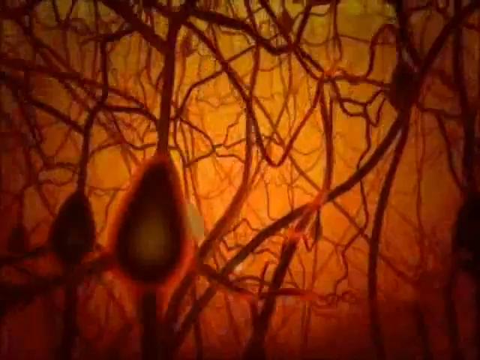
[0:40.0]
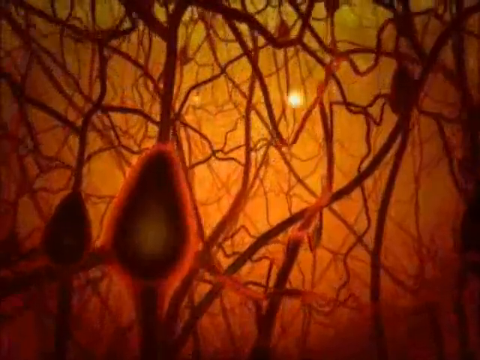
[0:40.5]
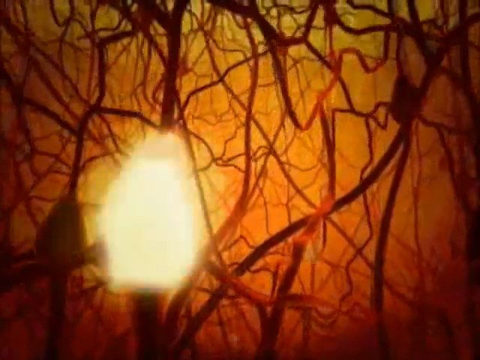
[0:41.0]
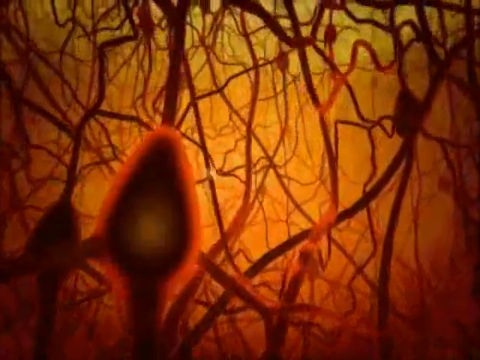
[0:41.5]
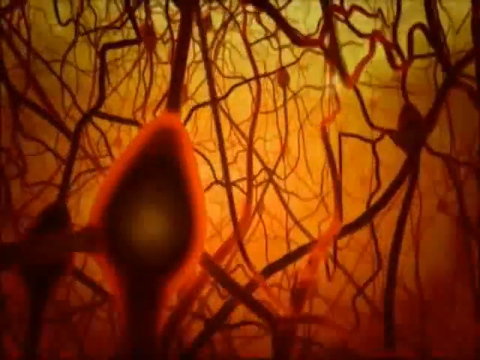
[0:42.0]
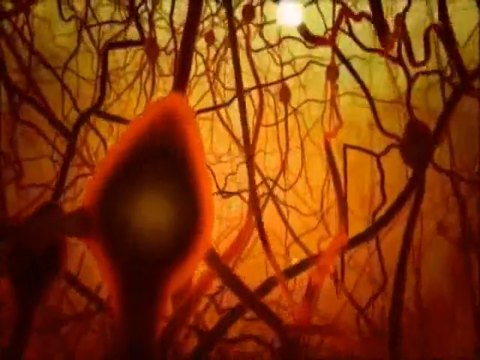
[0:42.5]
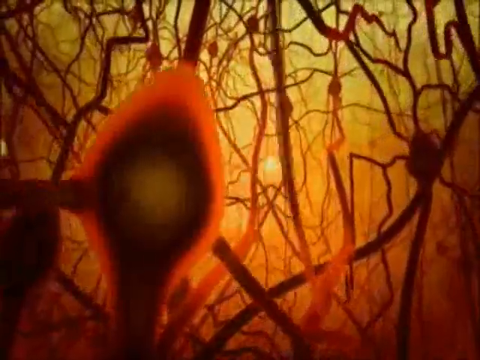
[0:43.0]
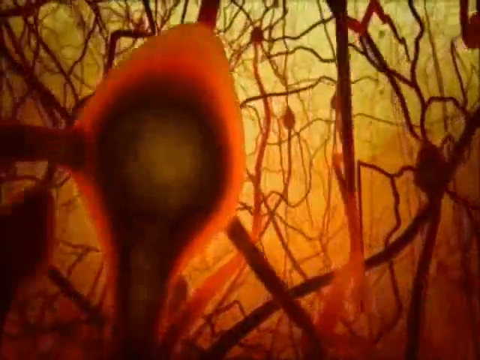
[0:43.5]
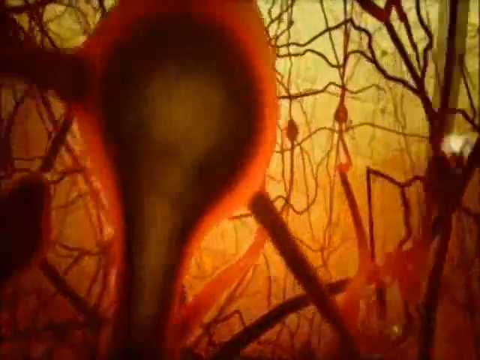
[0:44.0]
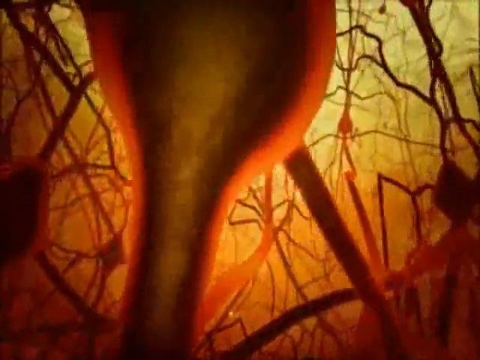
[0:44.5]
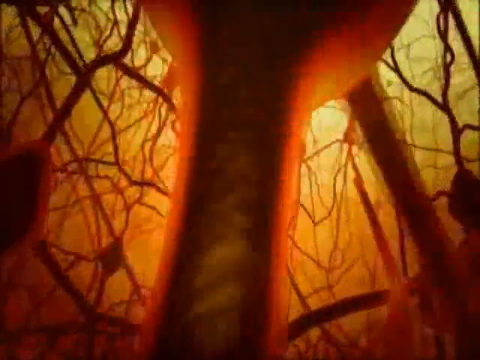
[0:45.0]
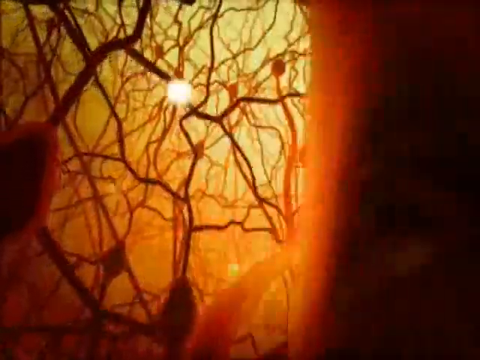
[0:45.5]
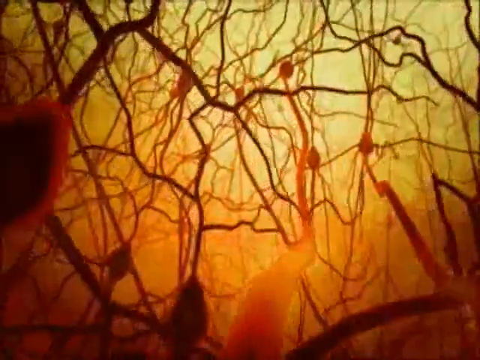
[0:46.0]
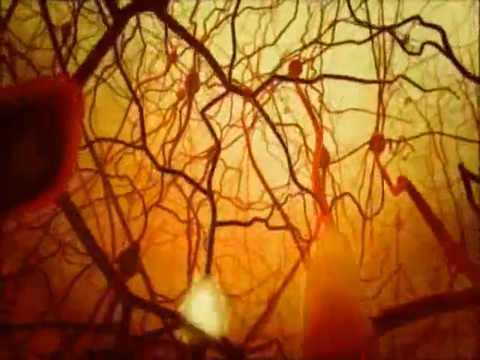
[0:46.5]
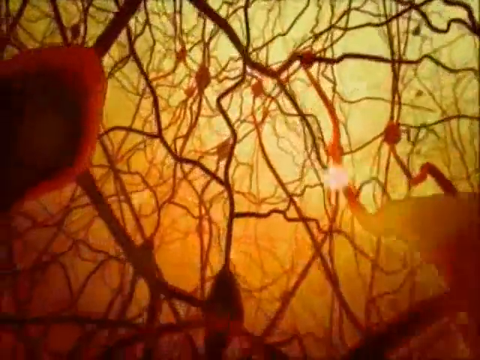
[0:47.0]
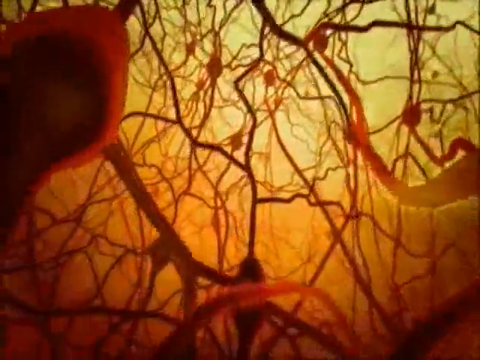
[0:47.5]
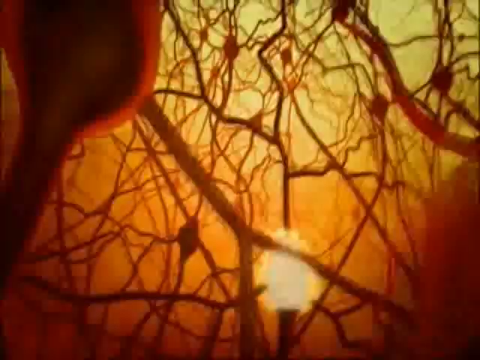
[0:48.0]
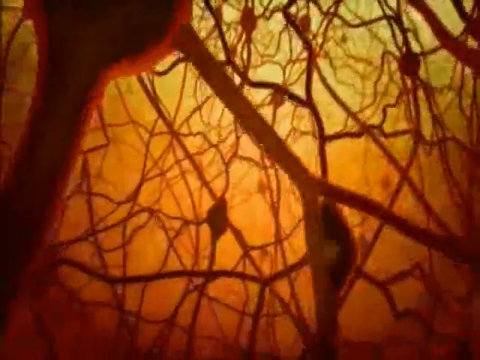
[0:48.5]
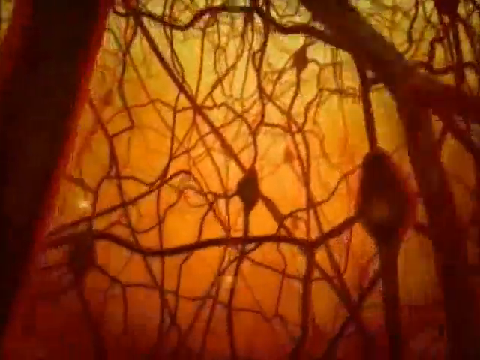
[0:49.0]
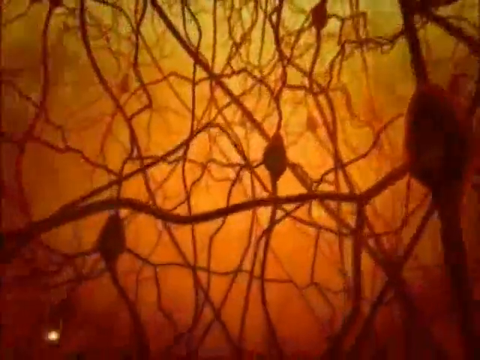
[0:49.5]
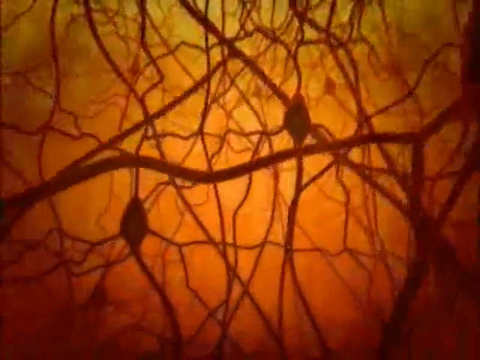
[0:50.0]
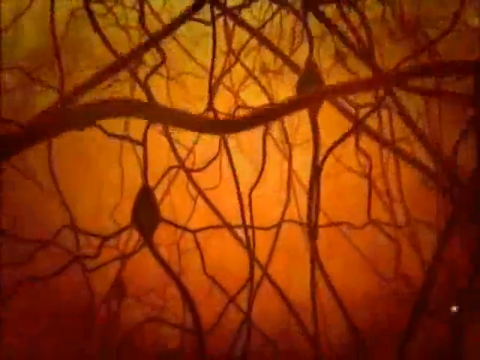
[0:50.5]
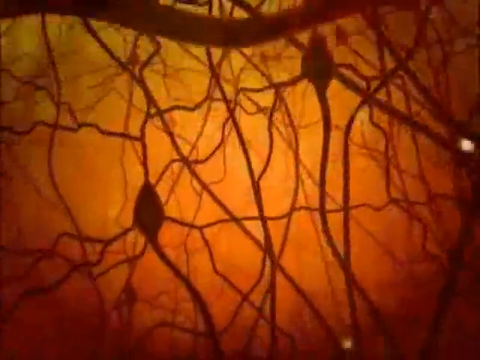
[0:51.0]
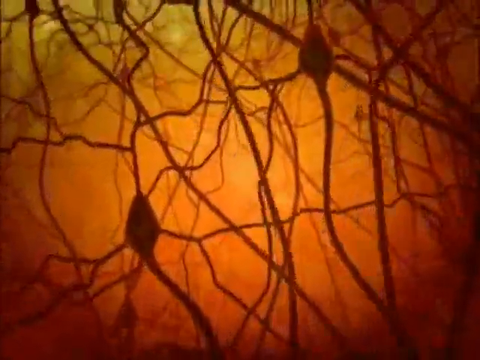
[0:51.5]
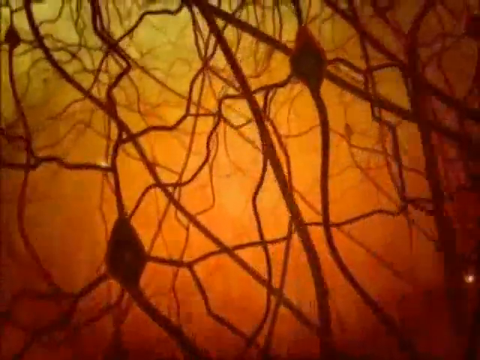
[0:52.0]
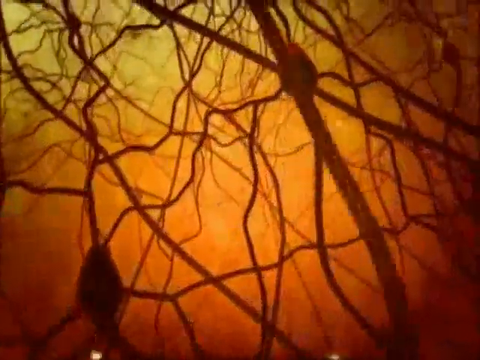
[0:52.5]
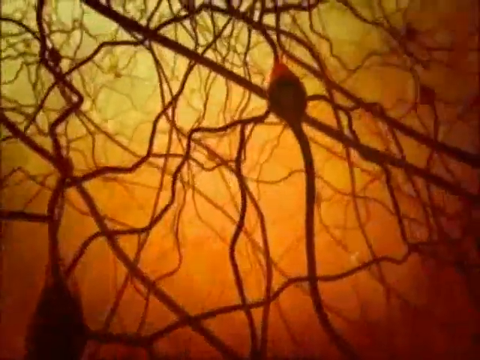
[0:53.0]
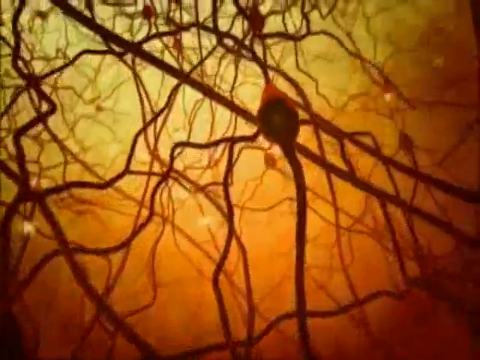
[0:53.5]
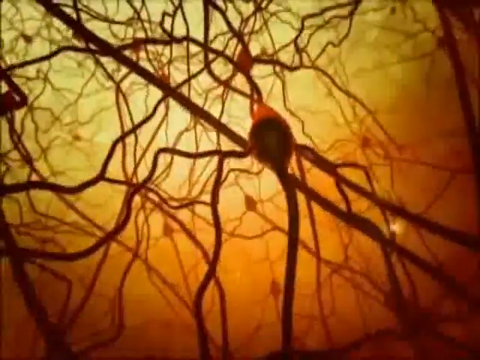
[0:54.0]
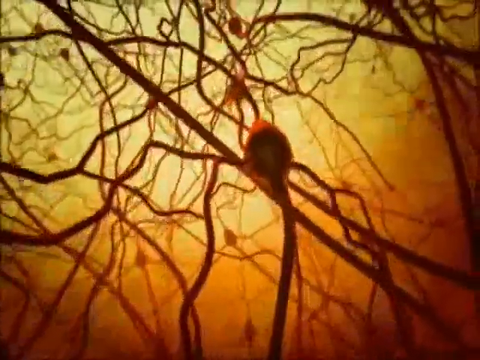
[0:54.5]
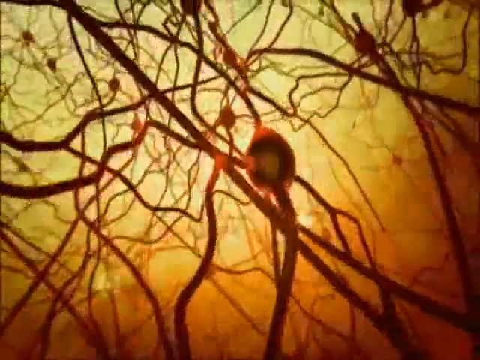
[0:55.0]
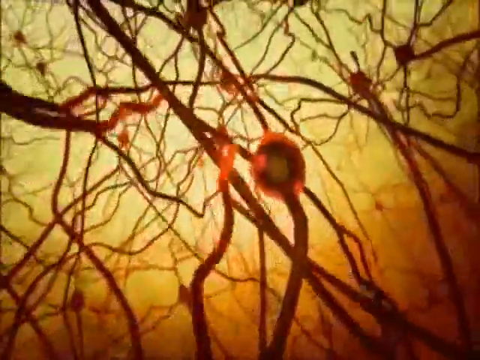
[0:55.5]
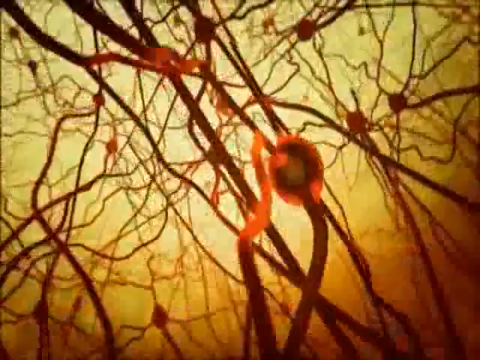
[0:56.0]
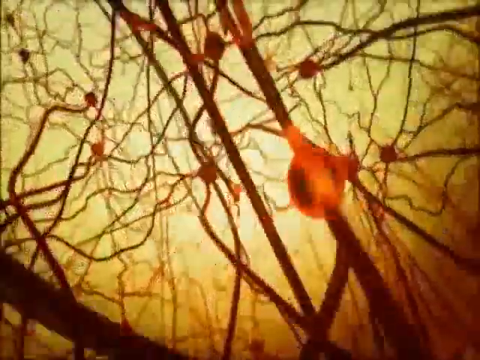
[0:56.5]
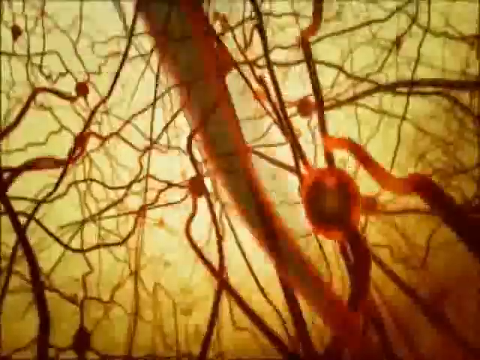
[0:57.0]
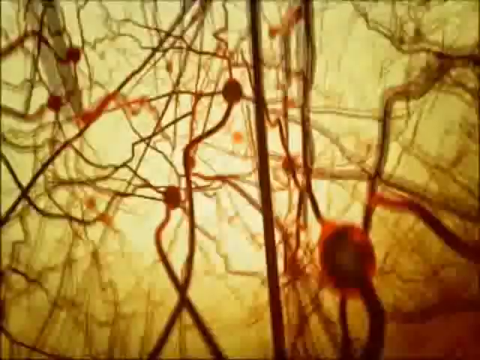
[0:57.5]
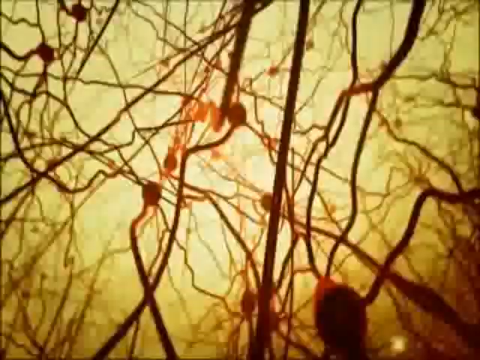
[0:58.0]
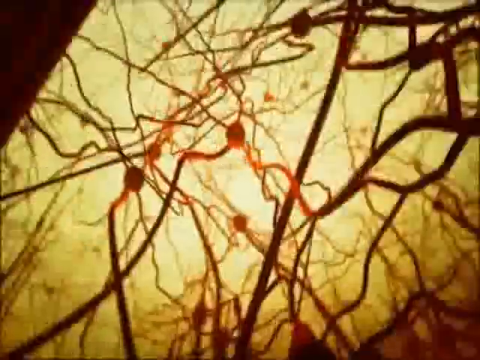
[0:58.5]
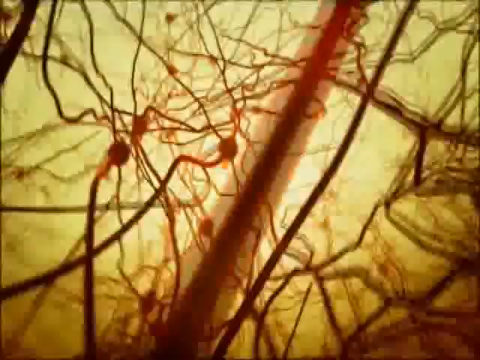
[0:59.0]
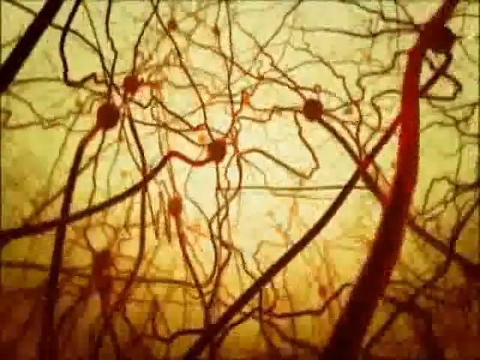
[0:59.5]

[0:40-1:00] Moving through the forest of neurons, the camera comes up close to one bulb shape, shaped almost like an avocado. It is dark reddish-brown with a faint red glow around it and is connected to the end of one of the strands. The camera zooms in on it and the red glow grows brighter and brighter. A pulsating yellow light travels up the strand from the bottom to the avocado-shaped orb, reaches it, and illuminates it, pulsing bright yellow before the color fades back. In the background, the same pattern repeats on other strands. The camera then floats down underneath the bulb-shaped end and shows another one close up on the left, which periodically illuminates with a pulse of bright yellow.